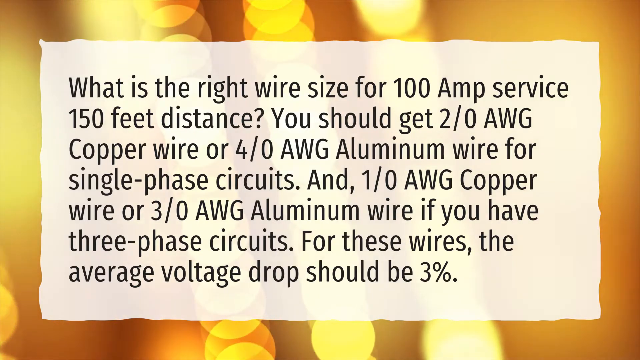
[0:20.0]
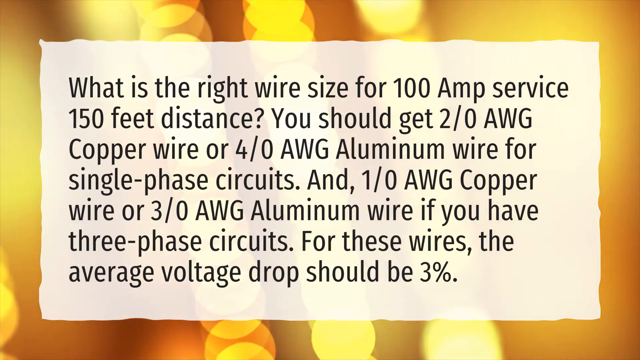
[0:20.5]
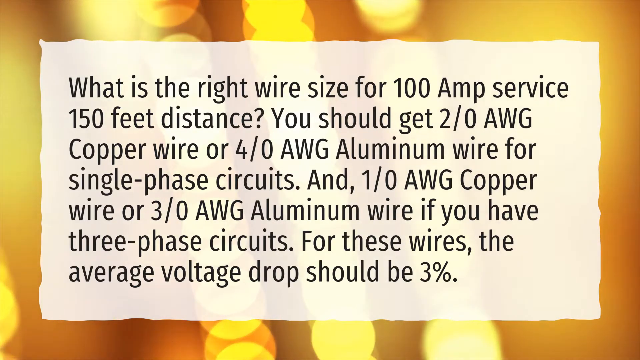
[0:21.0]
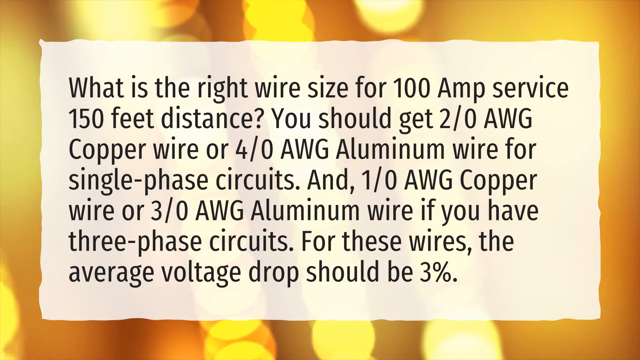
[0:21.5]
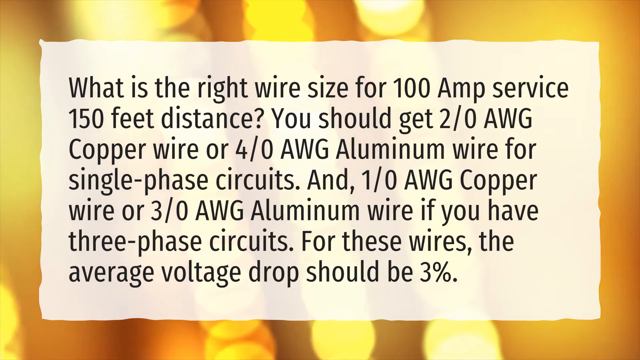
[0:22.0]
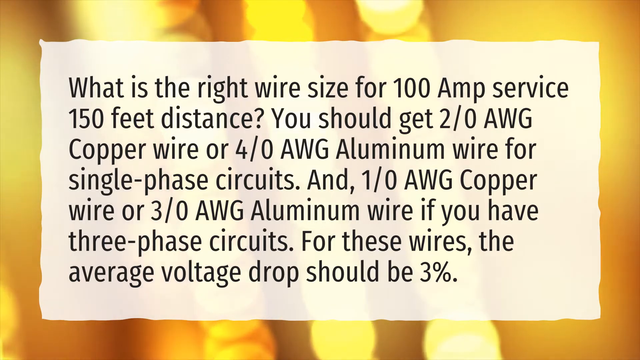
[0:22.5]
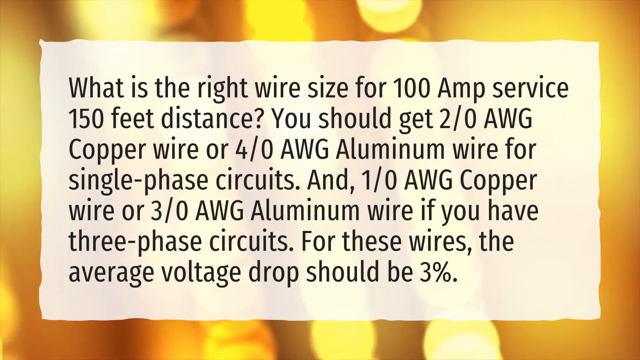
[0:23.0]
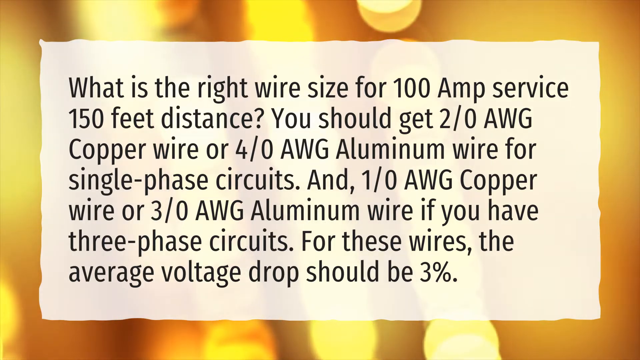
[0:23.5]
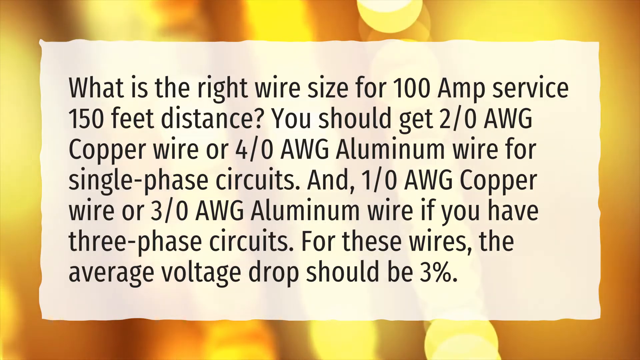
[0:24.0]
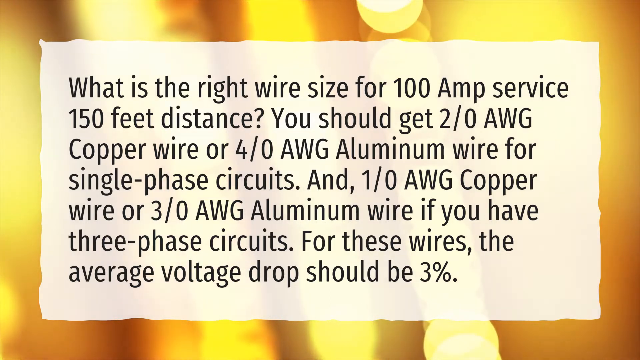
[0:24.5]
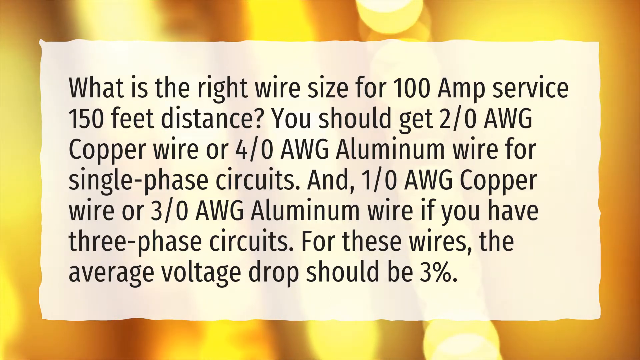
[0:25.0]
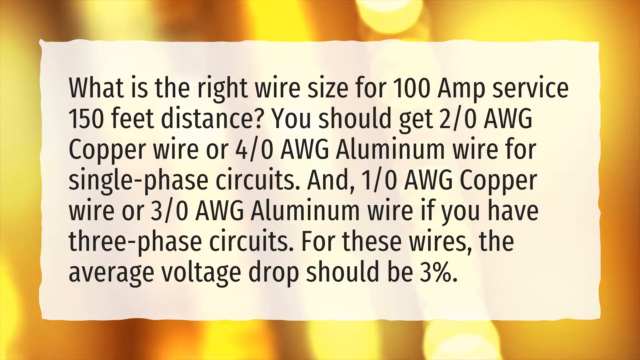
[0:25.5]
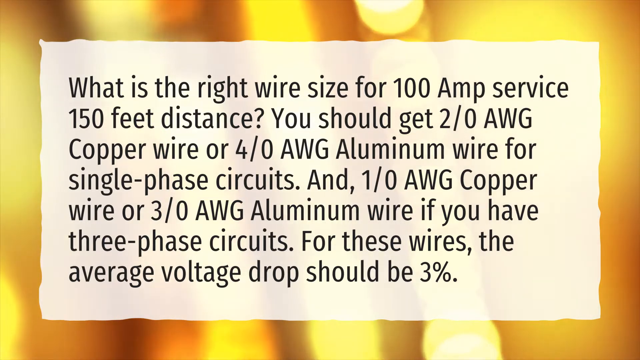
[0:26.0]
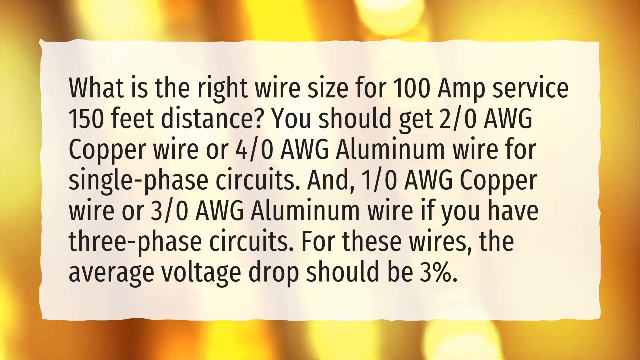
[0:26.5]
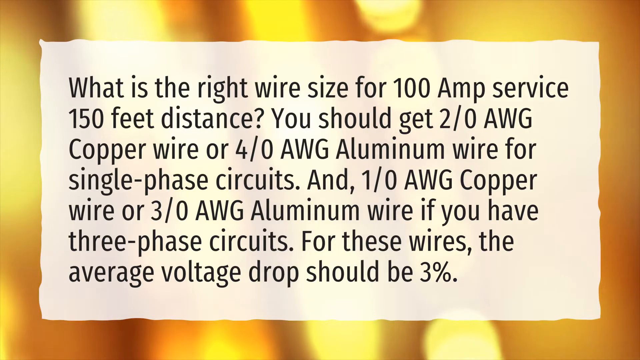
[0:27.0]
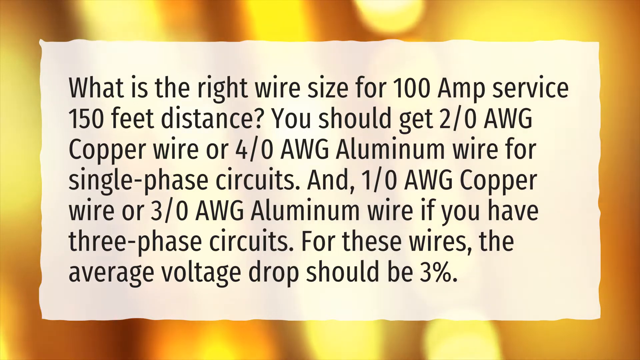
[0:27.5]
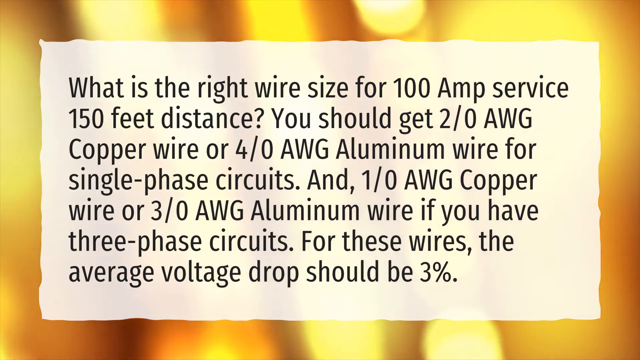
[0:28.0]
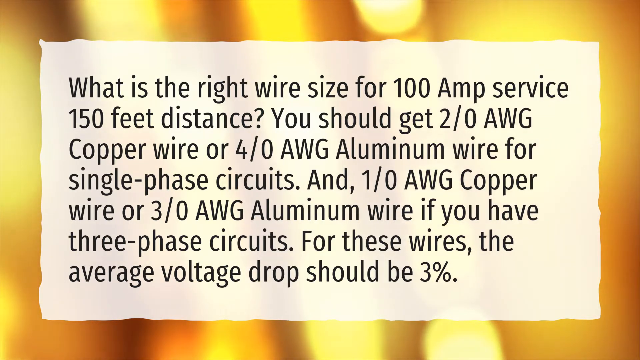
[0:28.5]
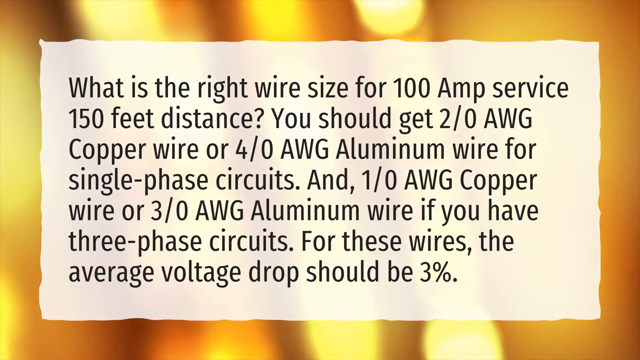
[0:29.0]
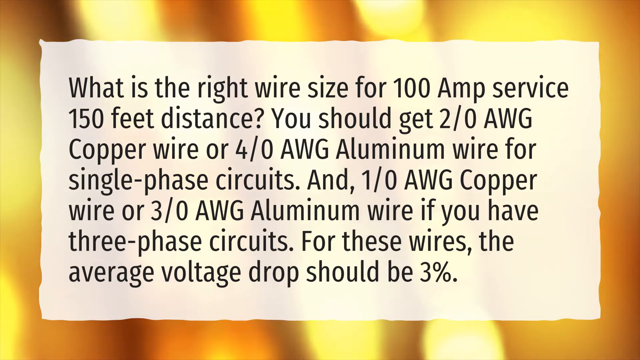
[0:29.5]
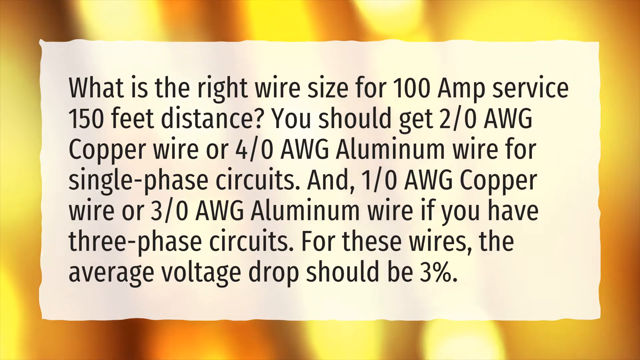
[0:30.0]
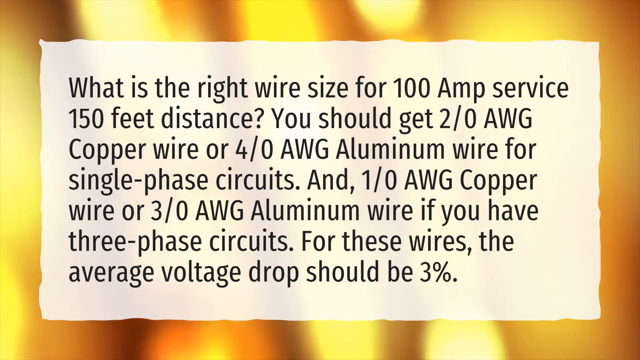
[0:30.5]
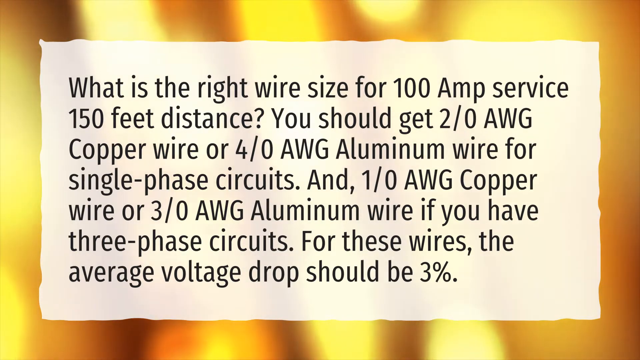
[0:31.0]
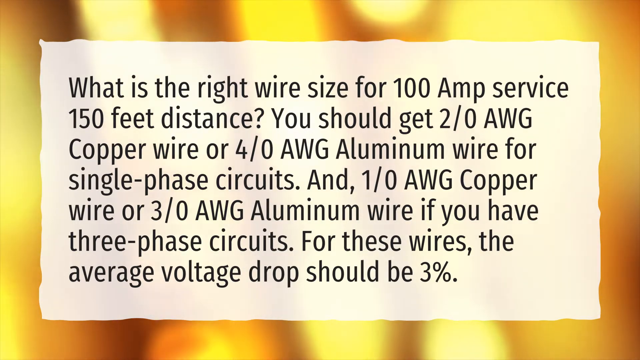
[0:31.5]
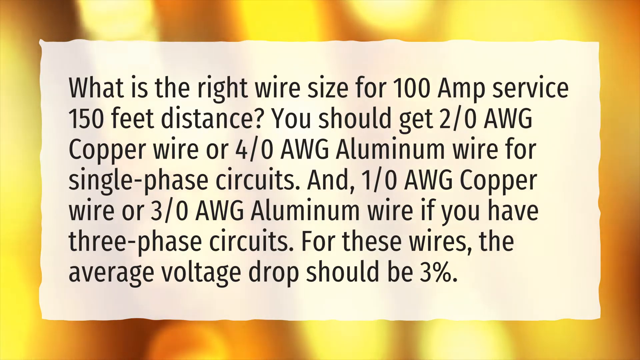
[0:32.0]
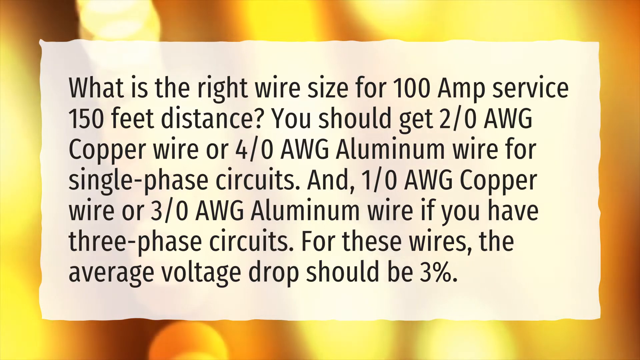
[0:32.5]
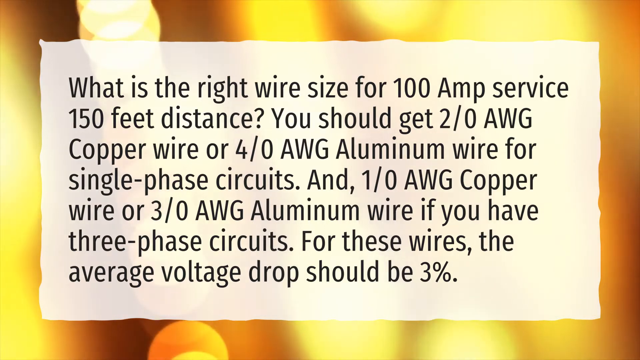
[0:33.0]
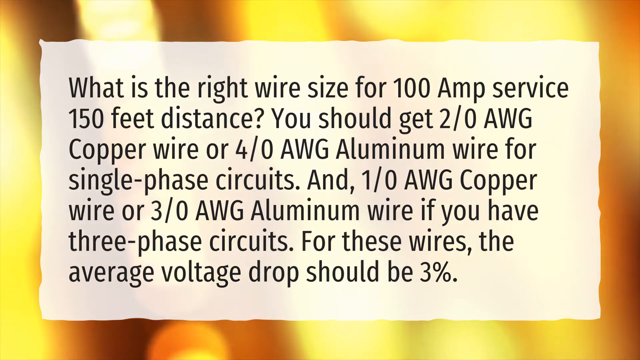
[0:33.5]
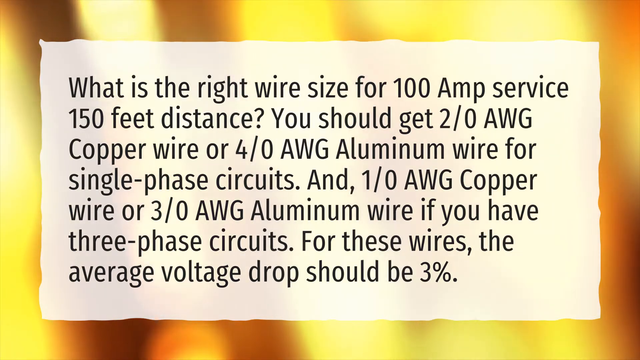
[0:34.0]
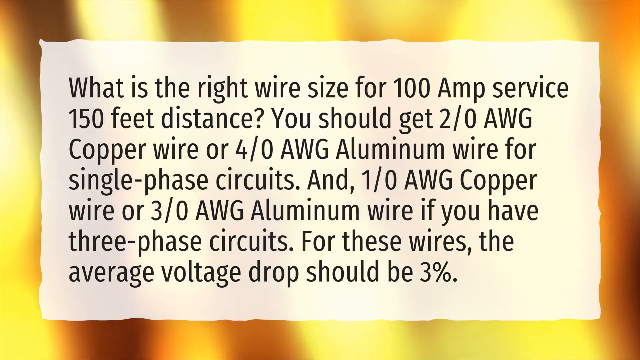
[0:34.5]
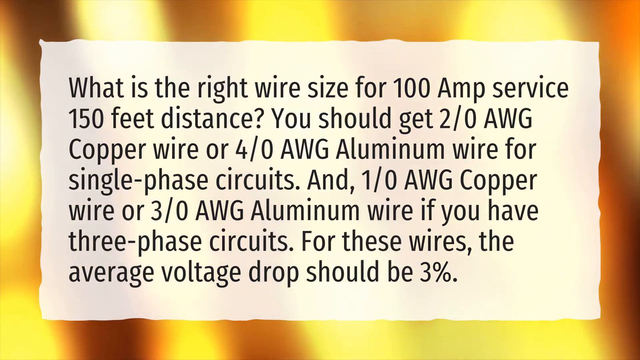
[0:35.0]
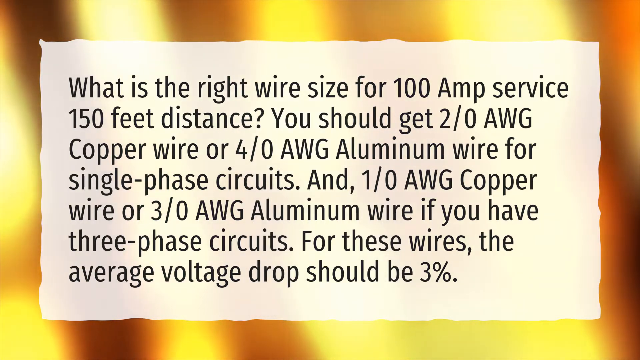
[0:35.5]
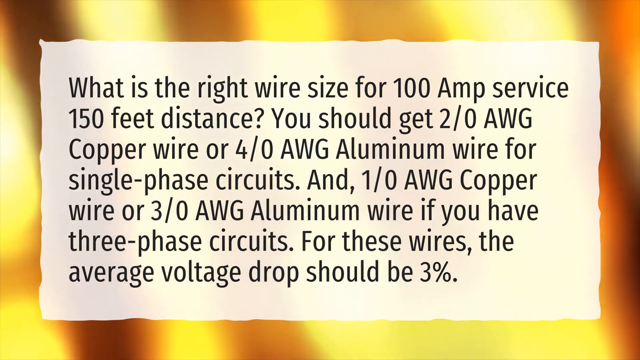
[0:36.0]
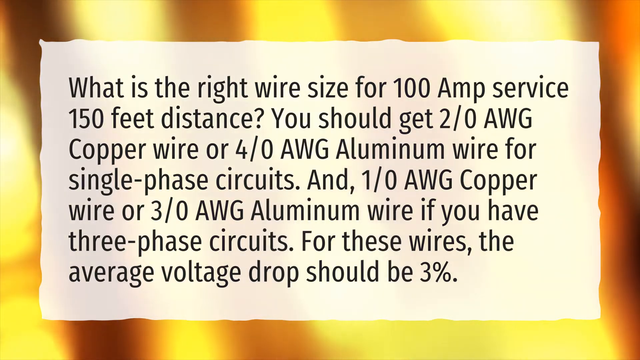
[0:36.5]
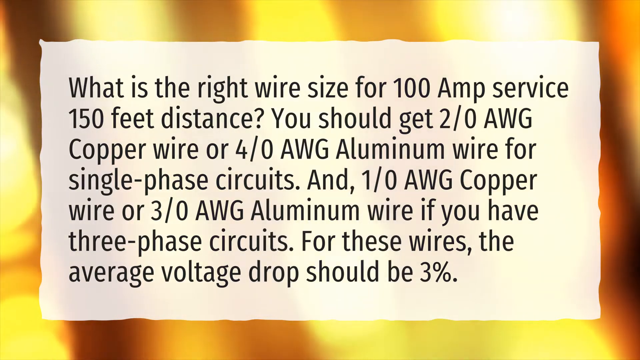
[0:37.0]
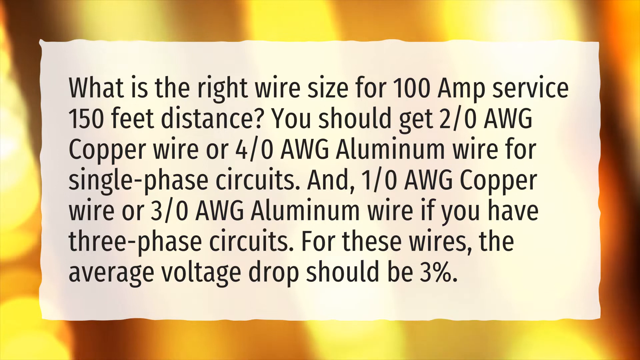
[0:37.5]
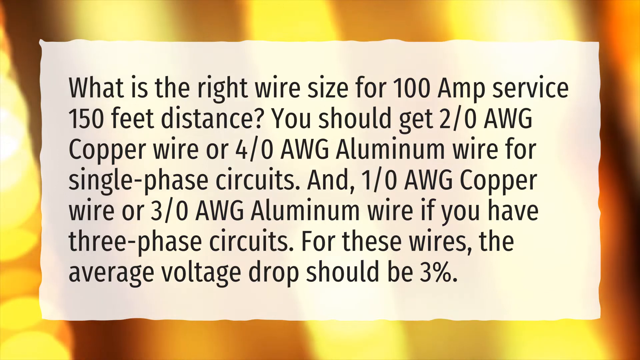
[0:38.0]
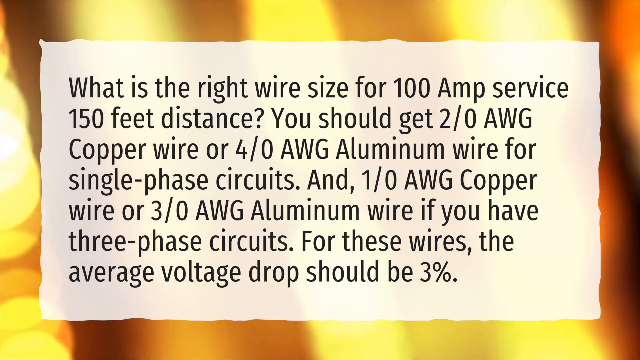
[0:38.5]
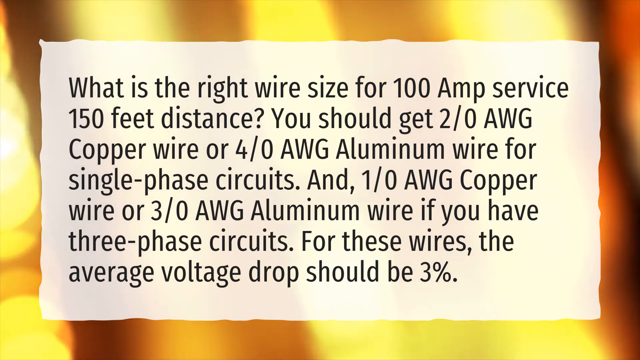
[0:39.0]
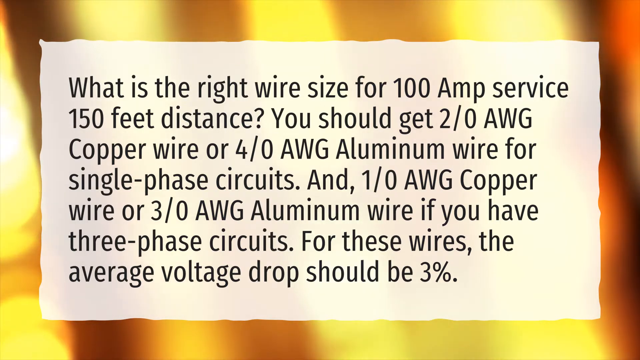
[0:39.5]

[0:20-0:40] In the background, a bunch of yellowish lights pulse. The scene stays on a question-and-answer area in a sort of transparent-looking rectangular white box. The question at the top reads "what is the right wire size for 100 amp service 150 feet distance?" followed by "you should get 2/0 AWG copper wire or 4/0 AWG aluminum wire for single phase circuits and 1/0 AWG copper wire or 3/0 AWG aluminum wire if you have 3 phase circuits. For the wires the average voltage drop should be 3%." The page holds a little longer while the background keeps pulsing a very yellowish color, kind of as if multiple lights are glowing yellow and dimming slightly but not fully.